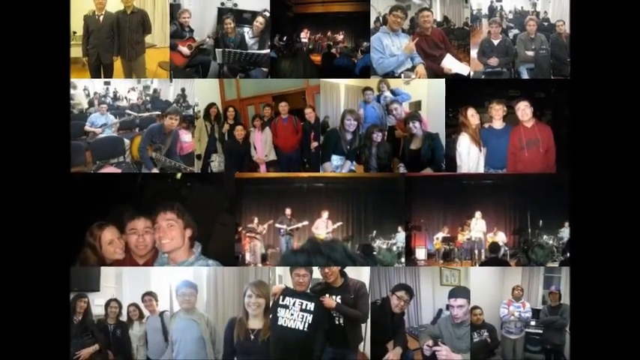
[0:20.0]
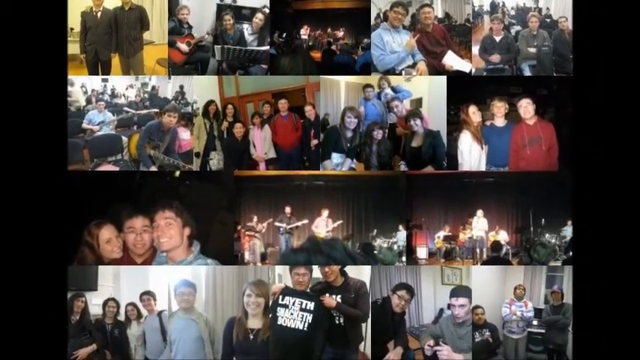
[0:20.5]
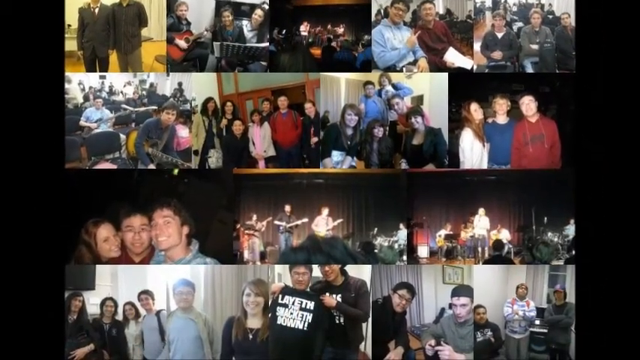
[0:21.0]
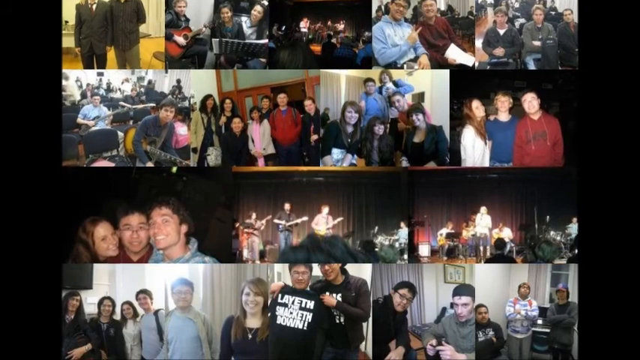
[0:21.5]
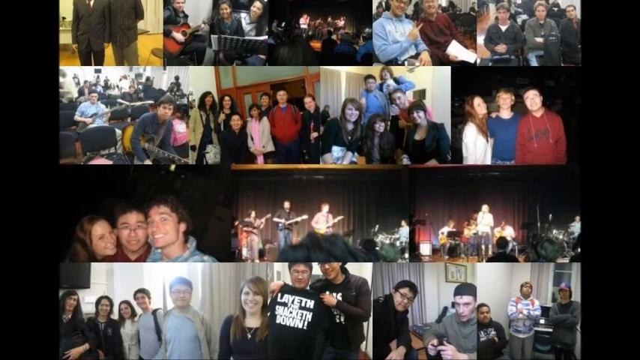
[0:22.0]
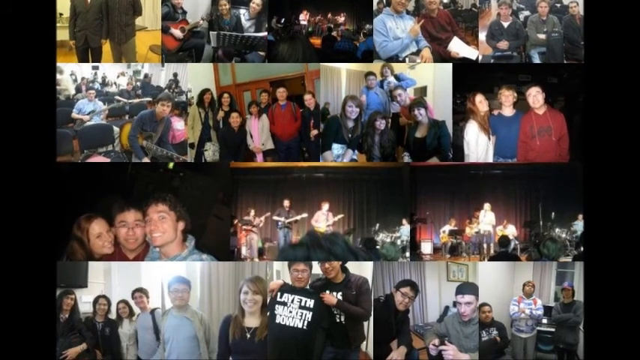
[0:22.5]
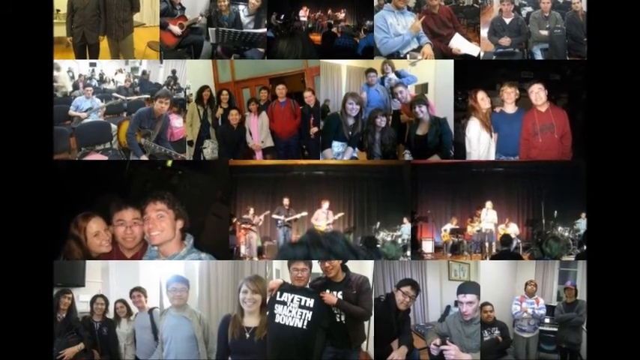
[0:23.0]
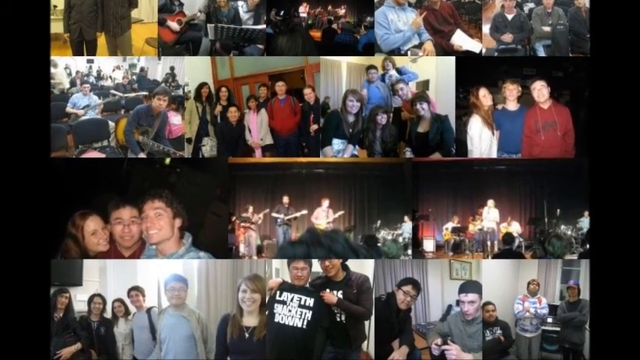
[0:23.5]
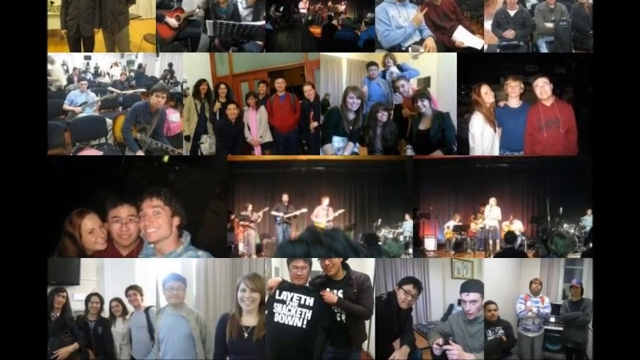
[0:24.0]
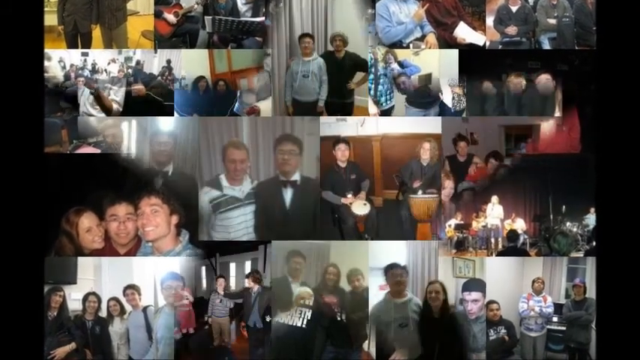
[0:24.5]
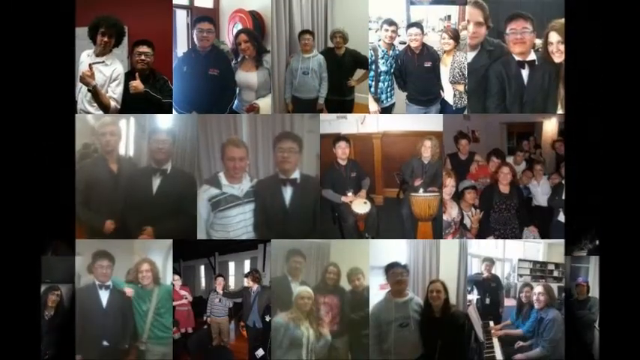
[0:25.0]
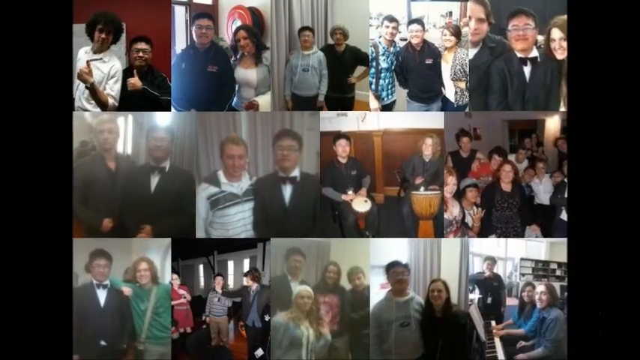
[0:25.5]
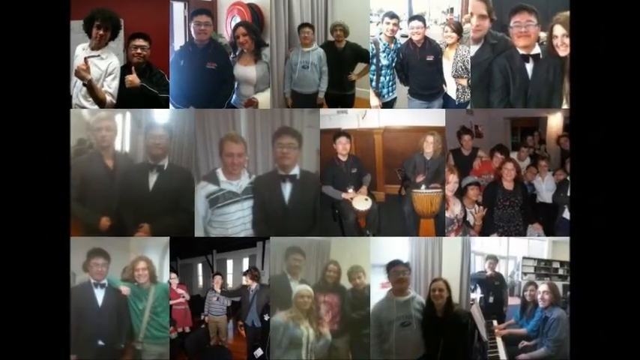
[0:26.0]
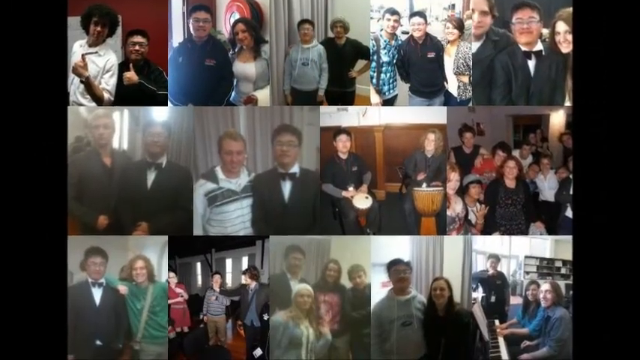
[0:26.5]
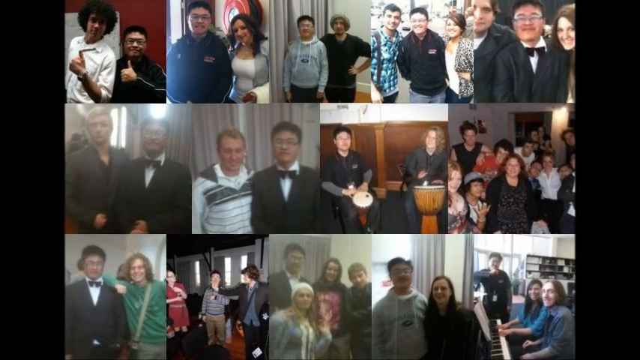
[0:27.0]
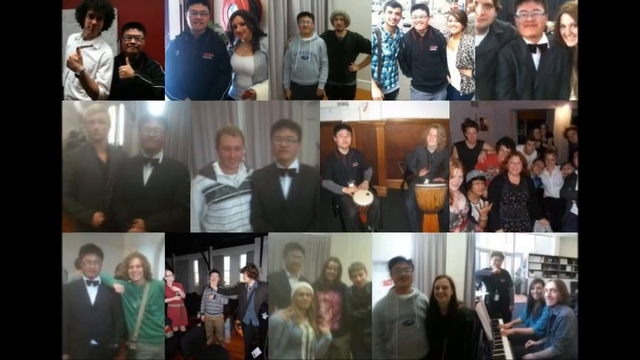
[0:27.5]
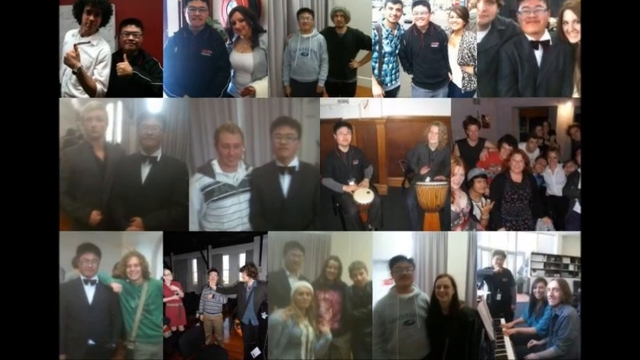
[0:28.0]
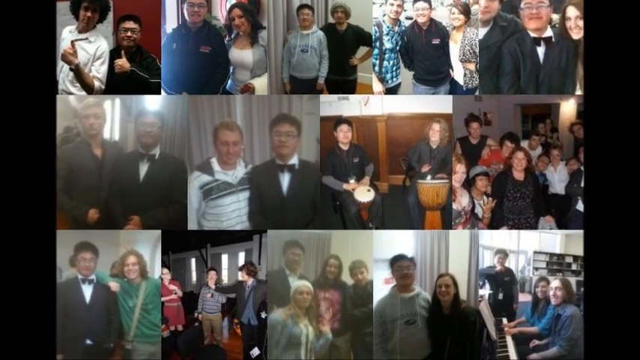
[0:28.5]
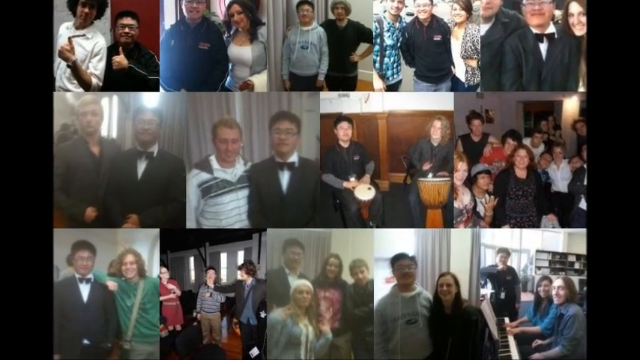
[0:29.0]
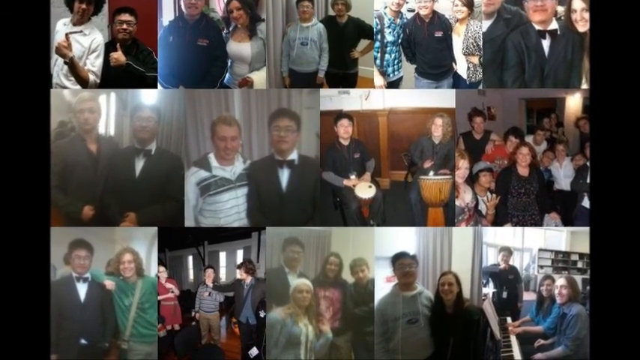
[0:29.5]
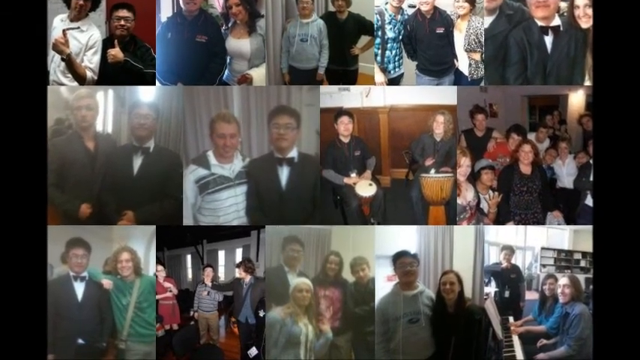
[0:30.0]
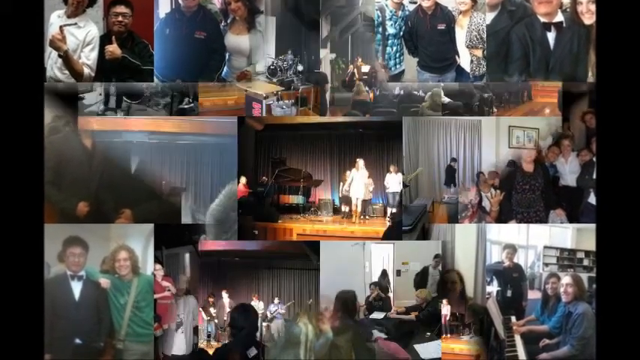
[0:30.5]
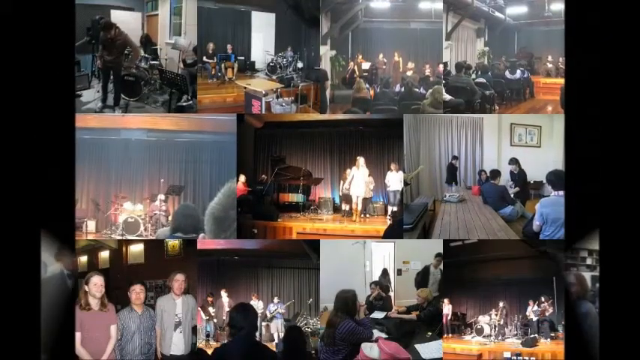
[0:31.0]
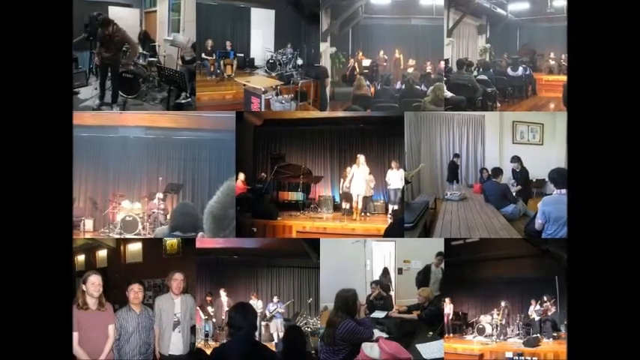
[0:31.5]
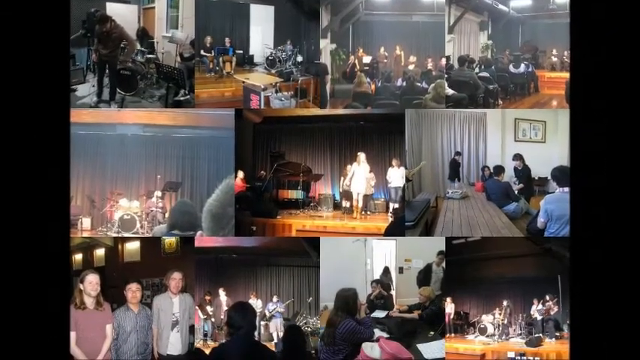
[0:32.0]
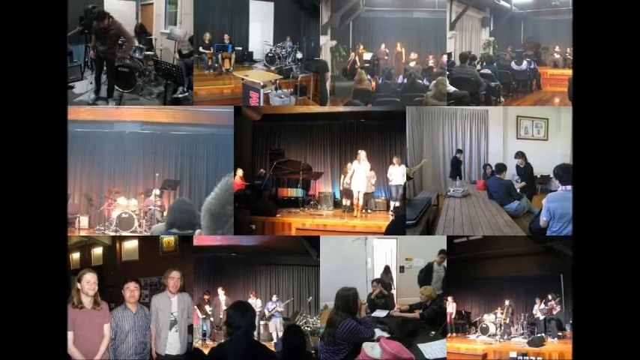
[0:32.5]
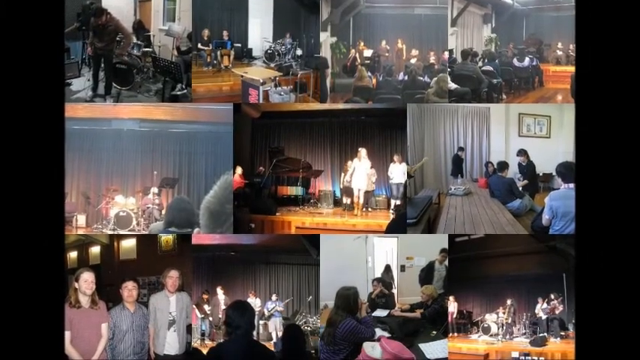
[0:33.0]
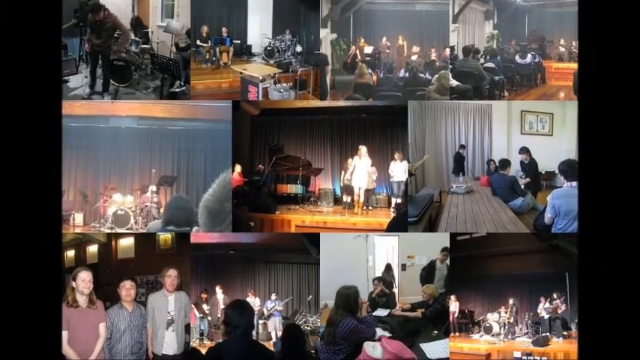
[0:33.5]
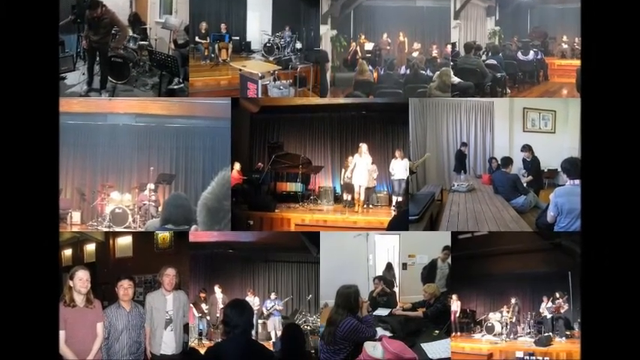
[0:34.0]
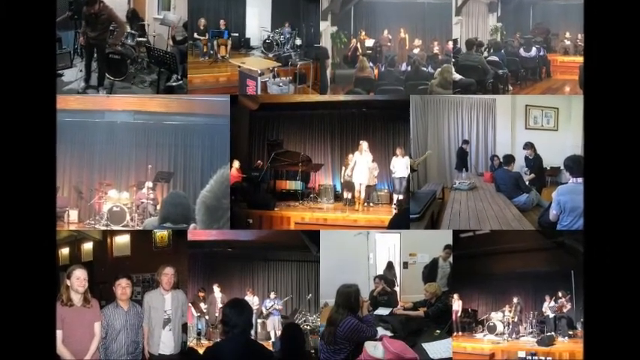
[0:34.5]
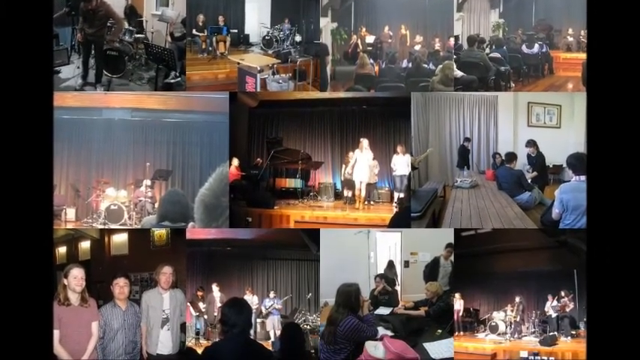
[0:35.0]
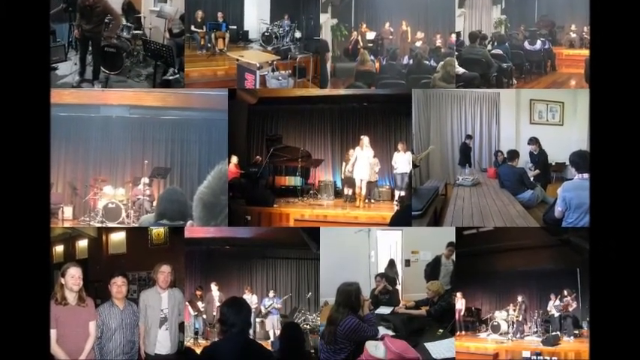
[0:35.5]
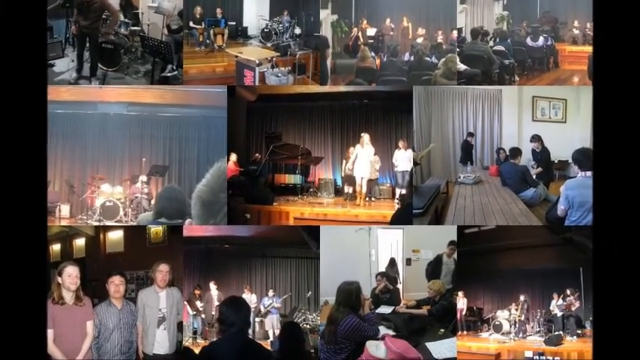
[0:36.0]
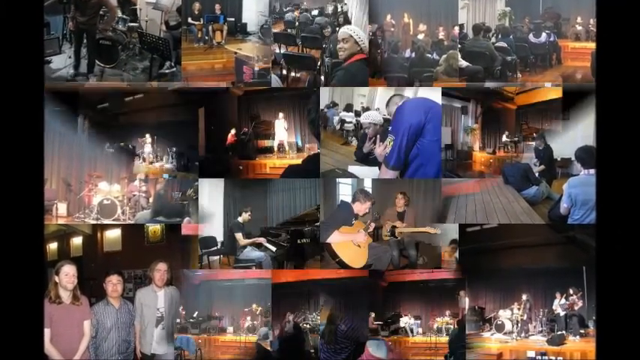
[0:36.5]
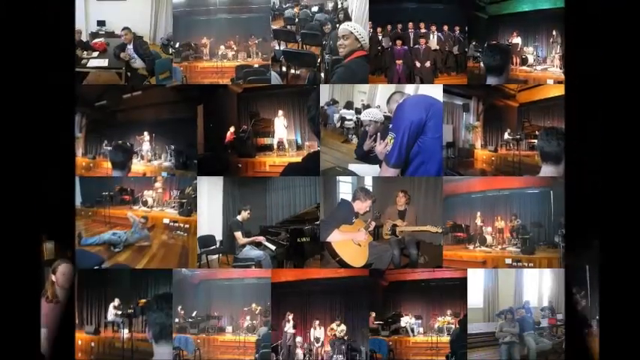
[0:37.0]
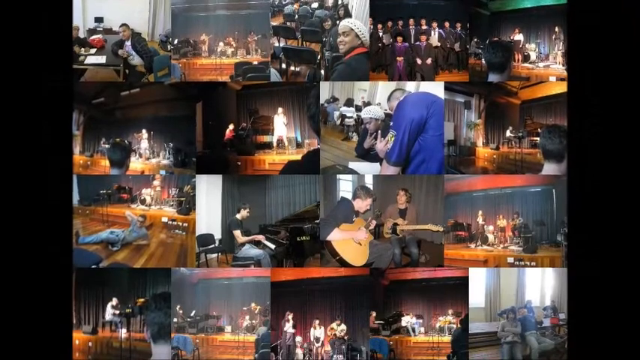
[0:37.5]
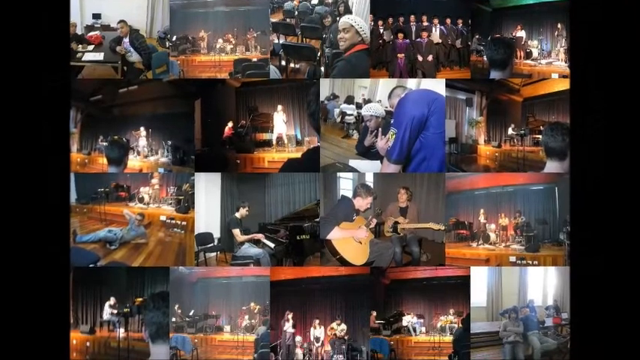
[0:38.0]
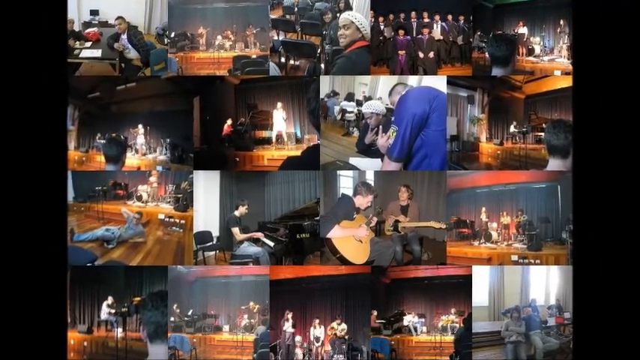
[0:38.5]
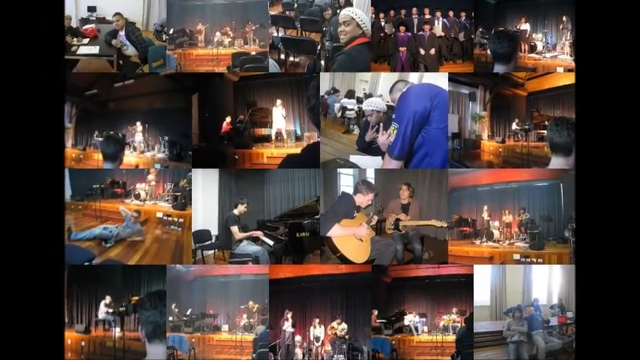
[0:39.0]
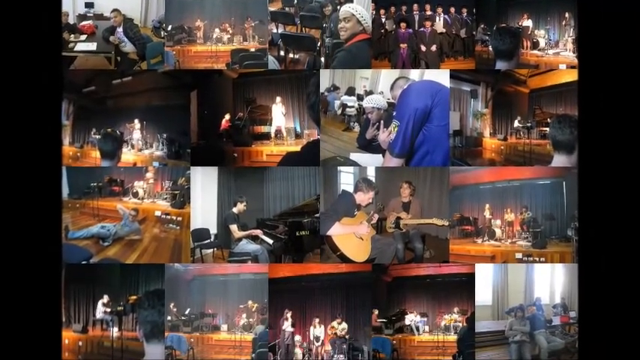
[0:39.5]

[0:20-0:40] More collages of people follow, very similar to the earlier ones, with the same people appearing in quite a few of them. Some show people with their arms around each other, and many show people on stage acting or playing instruments. On each collage the camera sort of zooms in quite slowly; each collage lasts about five seconds, with a sort of star-based transition between collages. Many of the faces cannot be seen distinctly. A Chinese guy apparently appears in a lot of the photos, though not all of them. It looks like a theatre group of some kind, maybe a school or community one. There are no visible hints about where it is or what specifically they are doing.